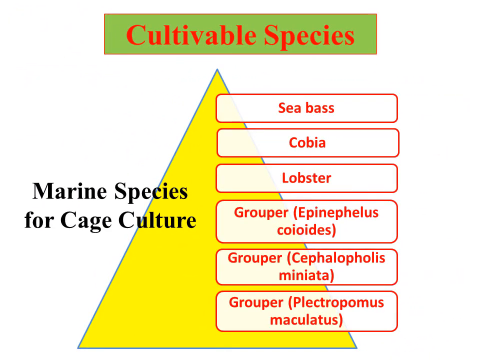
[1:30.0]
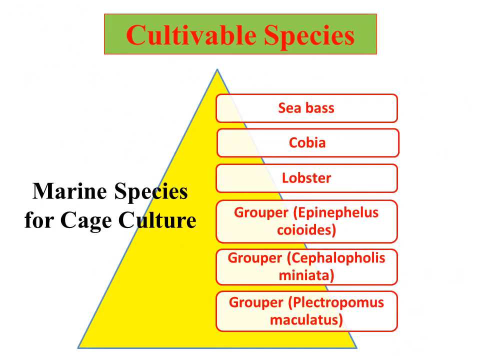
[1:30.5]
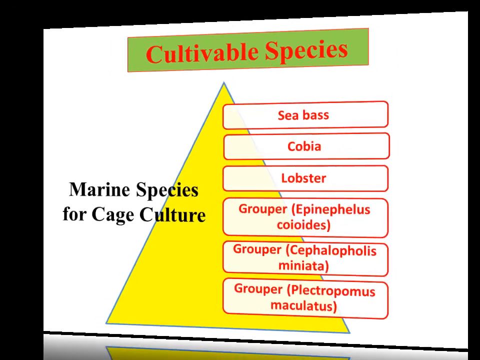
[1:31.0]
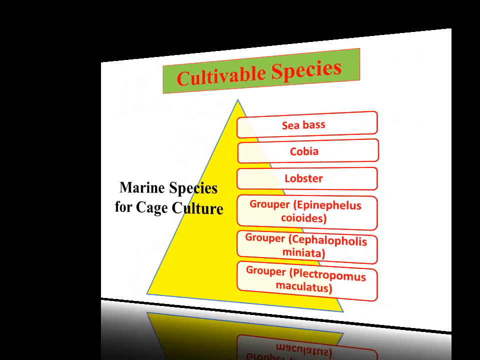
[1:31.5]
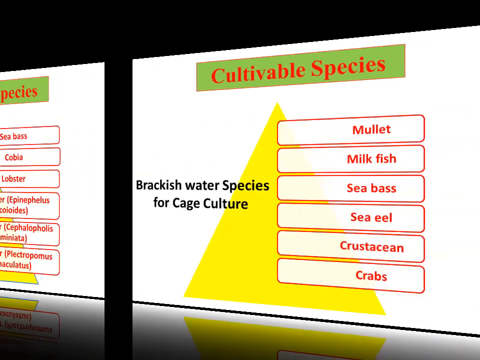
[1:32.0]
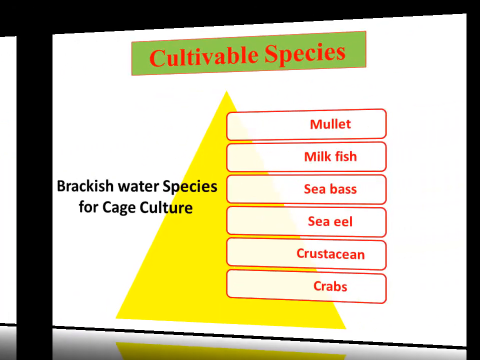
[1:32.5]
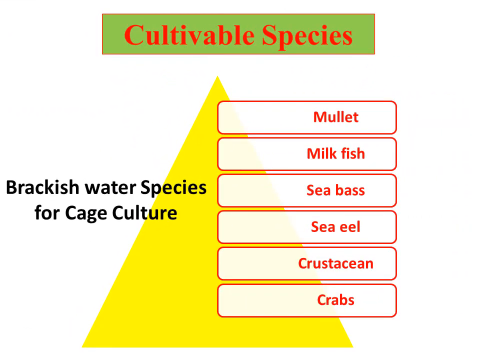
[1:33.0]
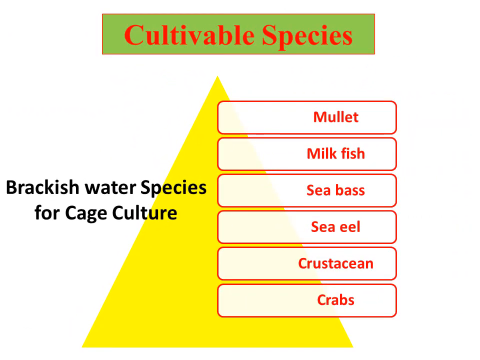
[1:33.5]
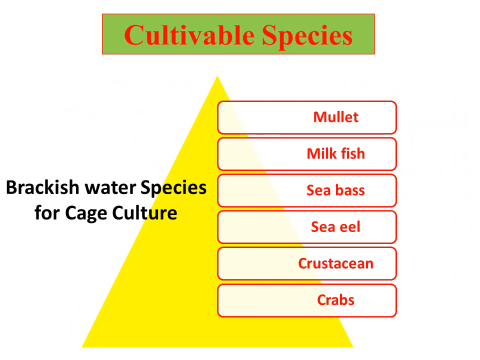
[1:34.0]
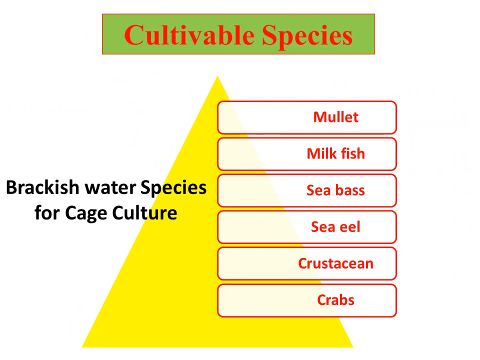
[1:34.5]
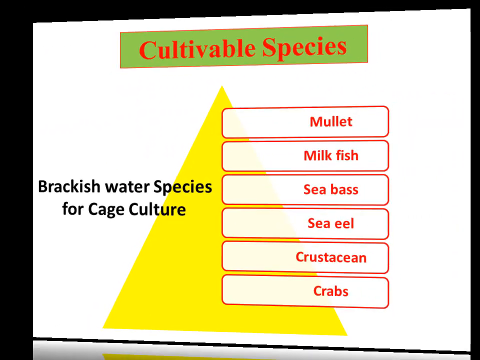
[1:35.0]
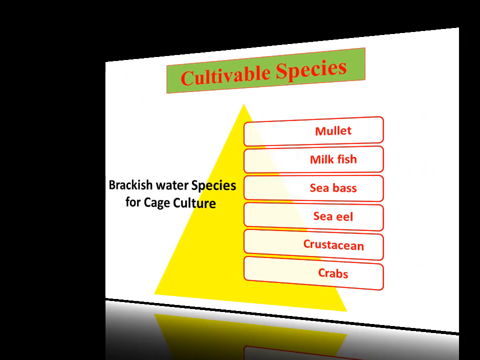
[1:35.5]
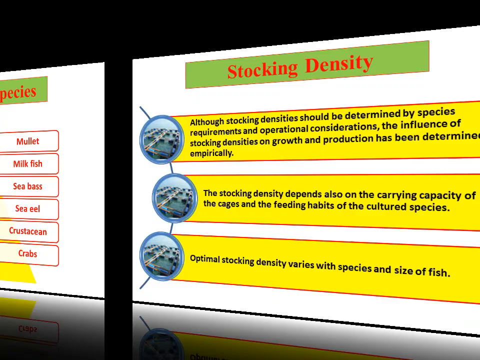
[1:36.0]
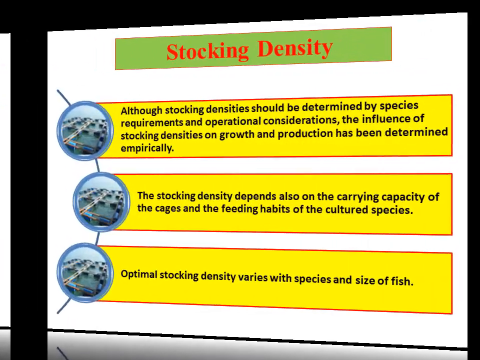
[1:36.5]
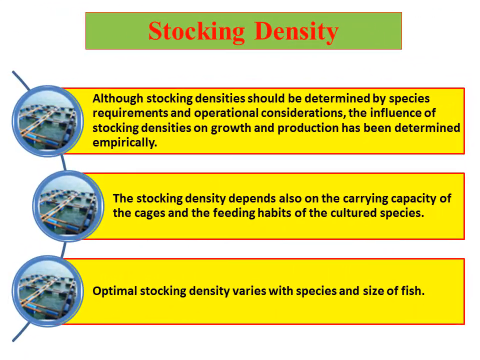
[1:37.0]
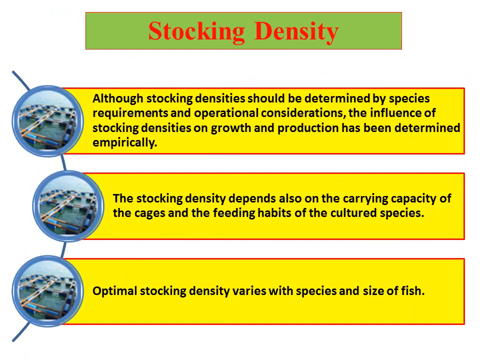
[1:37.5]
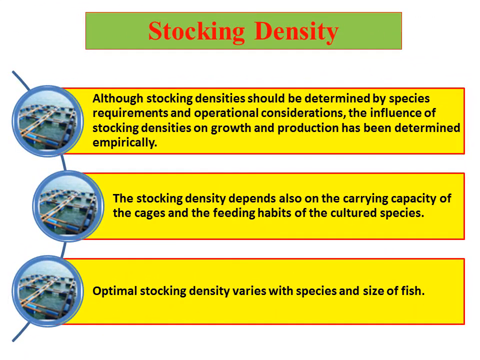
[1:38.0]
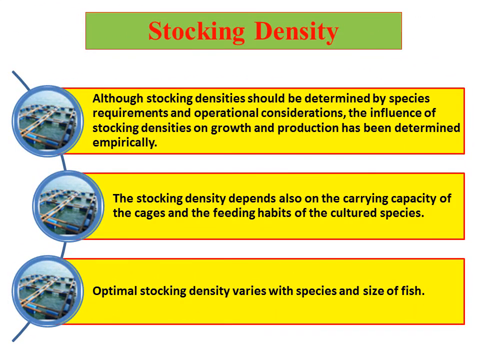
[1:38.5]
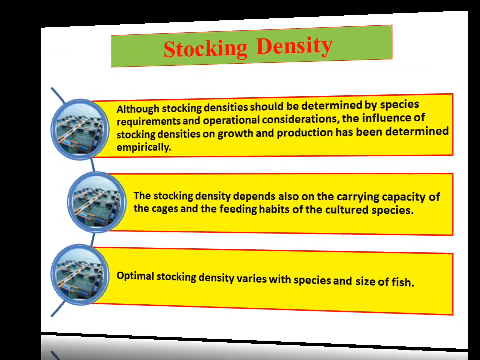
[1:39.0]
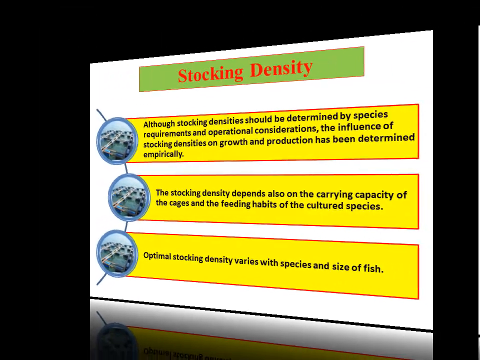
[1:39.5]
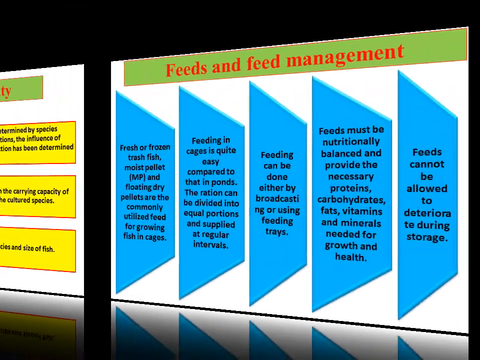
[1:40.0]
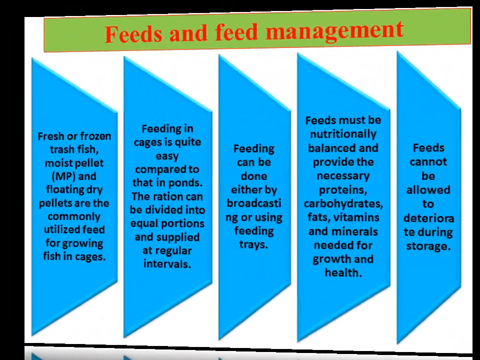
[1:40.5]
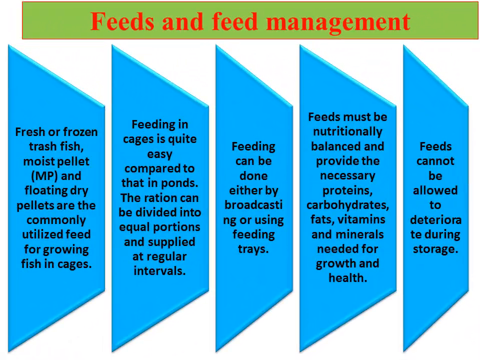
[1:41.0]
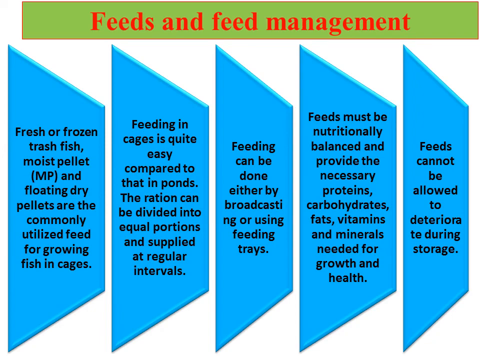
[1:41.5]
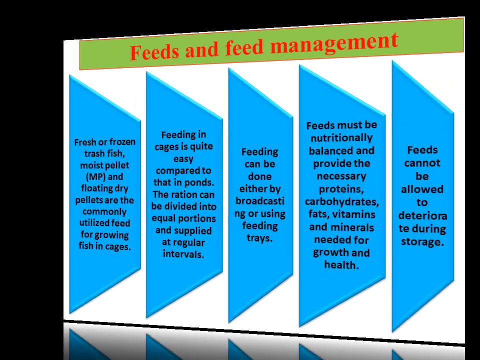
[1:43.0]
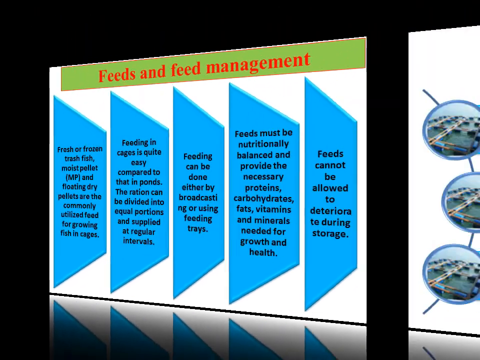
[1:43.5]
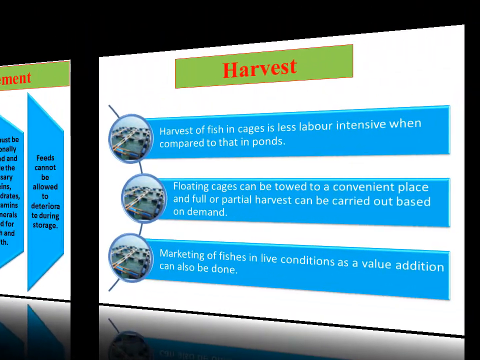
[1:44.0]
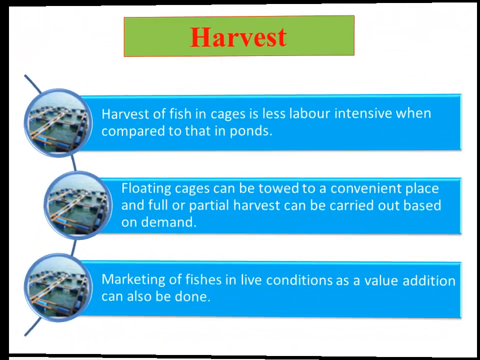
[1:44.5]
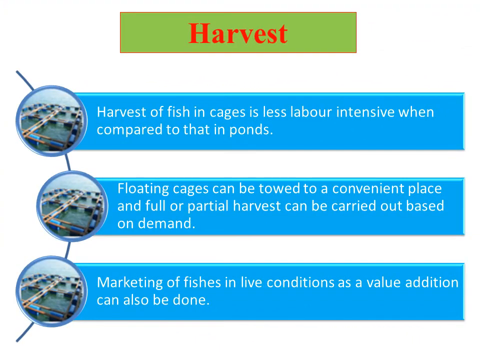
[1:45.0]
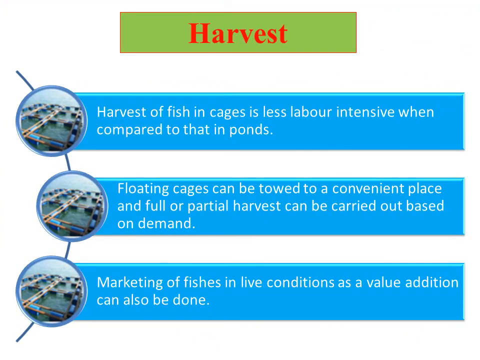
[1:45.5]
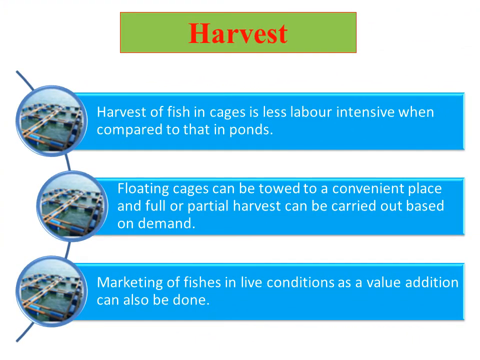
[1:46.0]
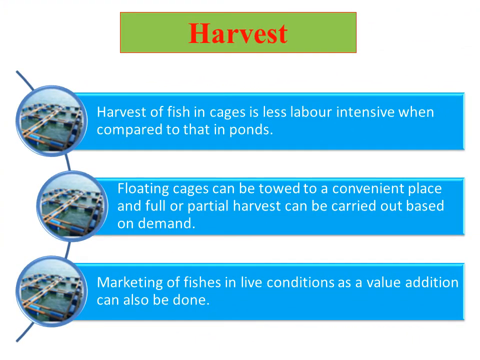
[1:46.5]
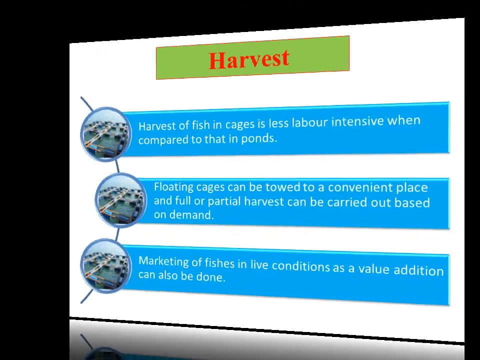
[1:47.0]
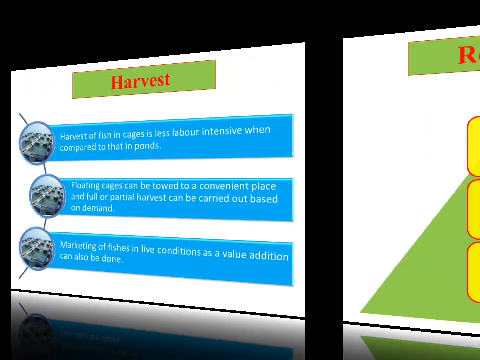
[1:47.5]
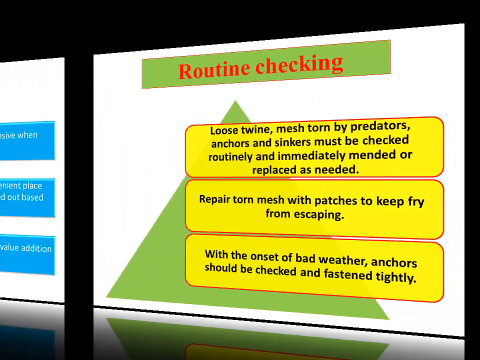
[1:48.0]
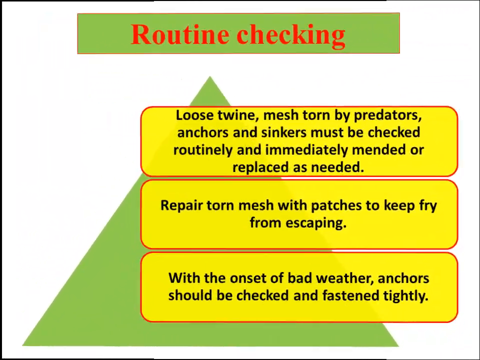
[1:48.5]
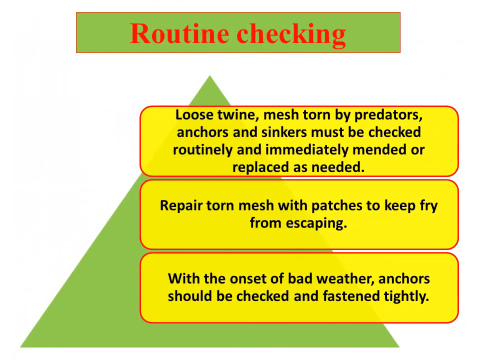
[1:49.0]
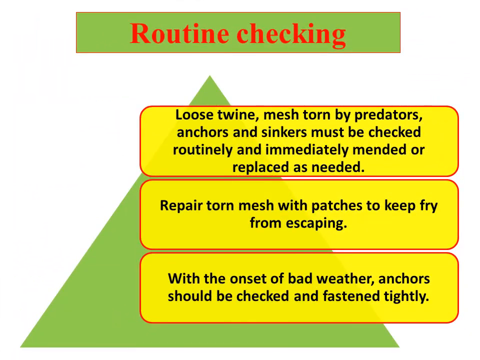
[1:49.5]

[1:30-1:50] A slide shows cultivable brackish water species, brackish water being usually where the river meets the sea, so the water is neither really fresh nor really salty; species include sea bass, sea eel, crustaceans, crabs, and mullet. Text states that optimal stocking density varies and should be determined by species requirements and optimal growth and production conditions, and that density depends on the carrying capacity of the cages. Next comes feeds and feed management: fresh or frozen fish or moist pellets are most commonly used; feeding in cages is easy, with rations divided, and can be done by feeding trays or broadcasting the feed; feed must be nutritionally balanced with the right minerals and vitamins to grow healthy fish and must be kept fresh and not allowed to deteriorate during storage. Harvesting fish in cages is described as less labor intensive than in open ponds; the cages can be towed to a convenient place for full or partial harvest, and marketing the fish live is a valued addition. Routine checking covers looking for loose twine or mesh torn by predators, immediately mending or replacing as needed, repairing torn mesh to keep small fish from escaping, and checking and tightly fastening anchors with the onset of bad weather.